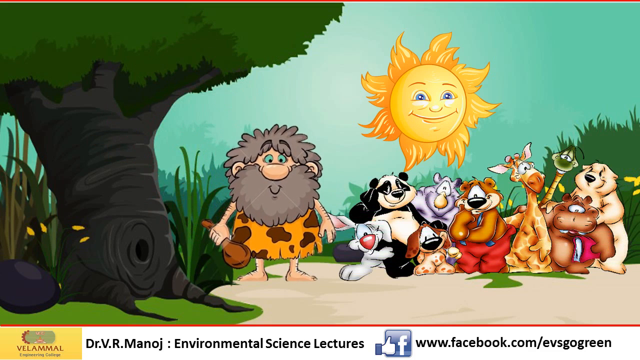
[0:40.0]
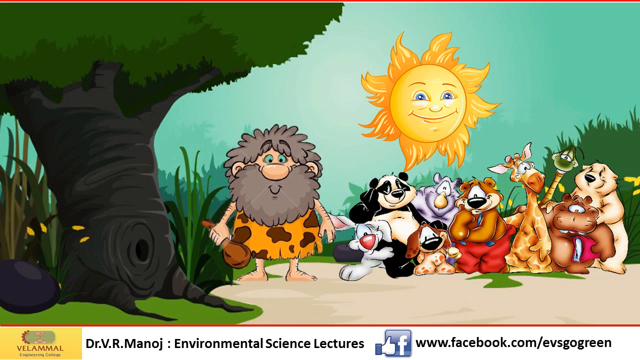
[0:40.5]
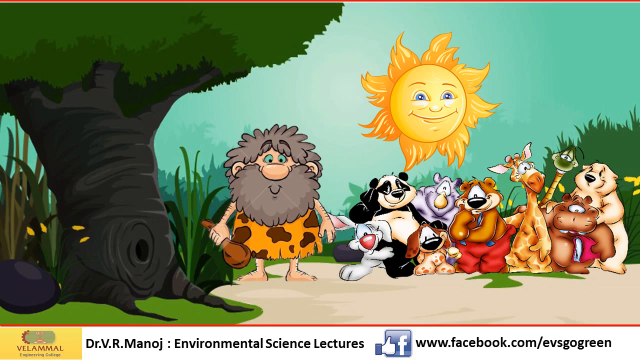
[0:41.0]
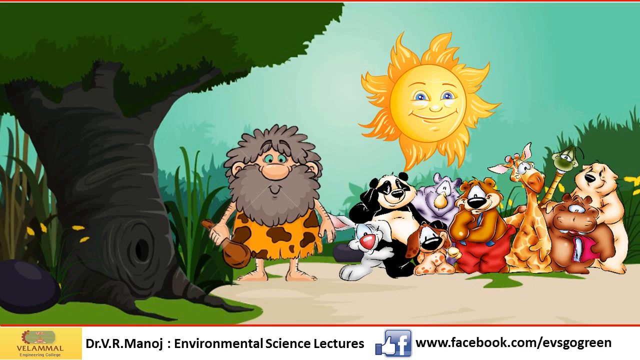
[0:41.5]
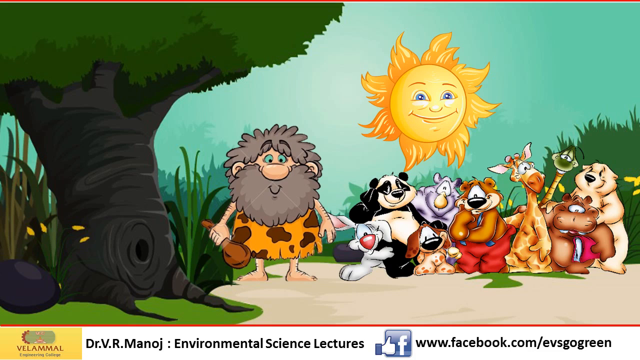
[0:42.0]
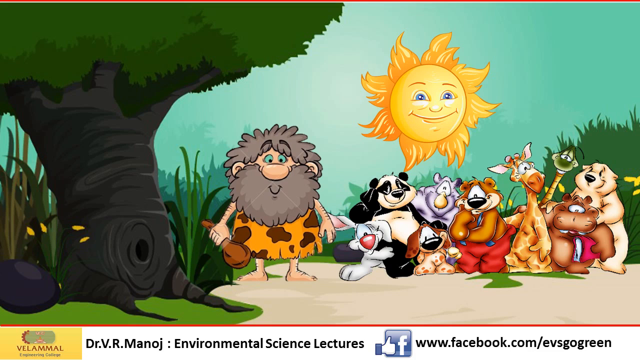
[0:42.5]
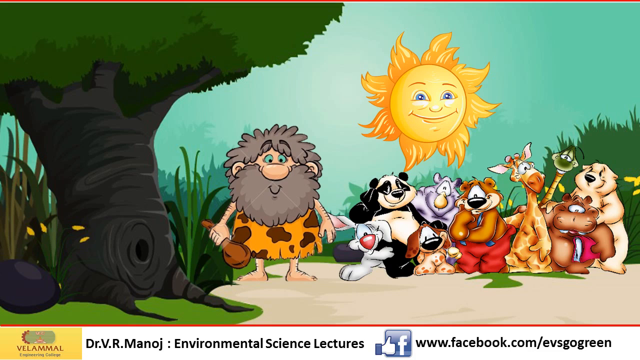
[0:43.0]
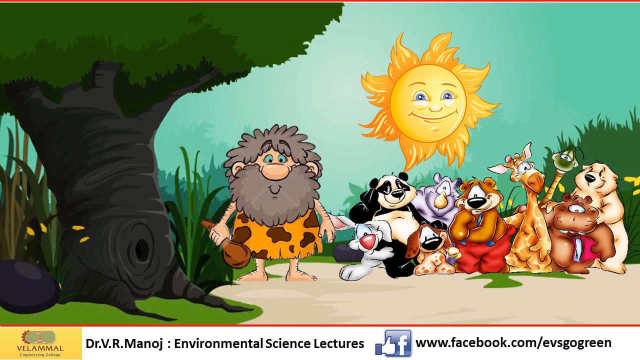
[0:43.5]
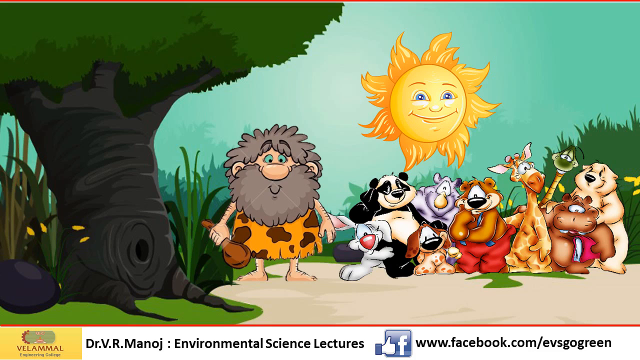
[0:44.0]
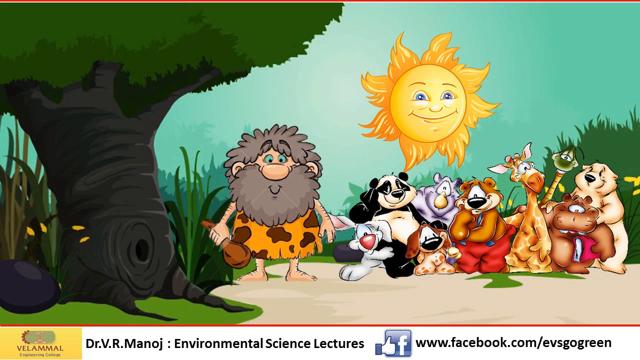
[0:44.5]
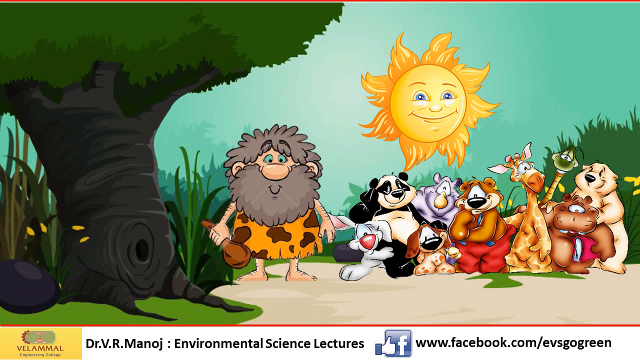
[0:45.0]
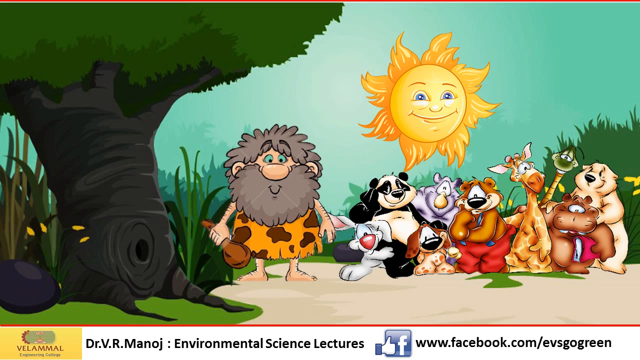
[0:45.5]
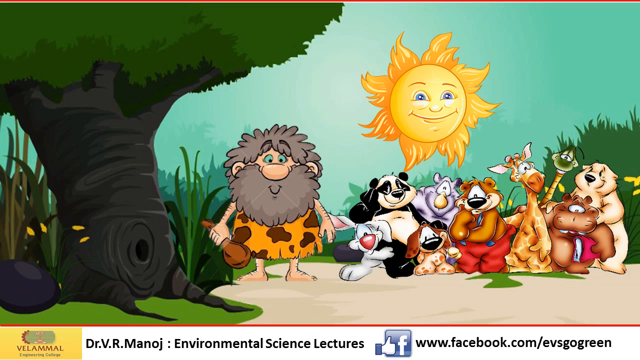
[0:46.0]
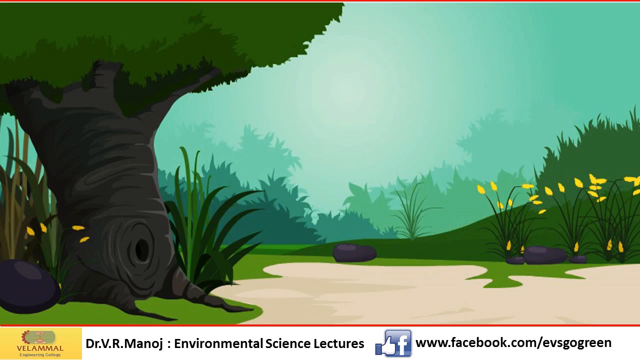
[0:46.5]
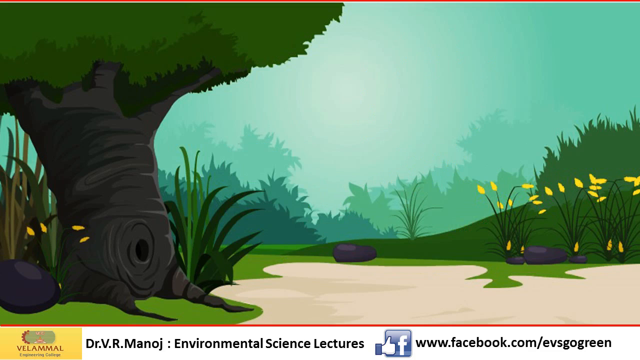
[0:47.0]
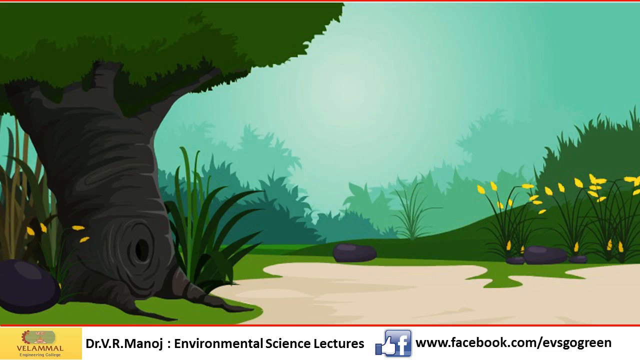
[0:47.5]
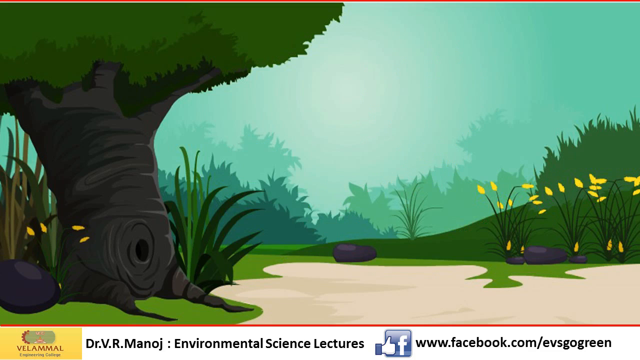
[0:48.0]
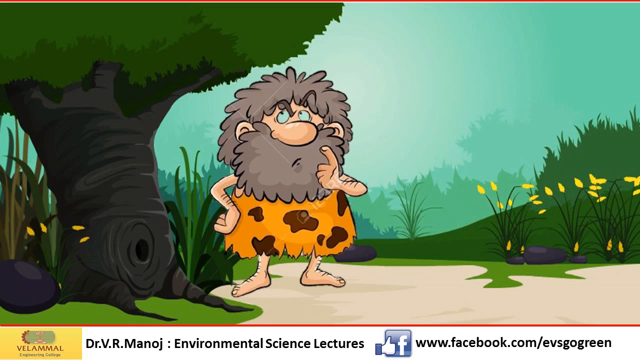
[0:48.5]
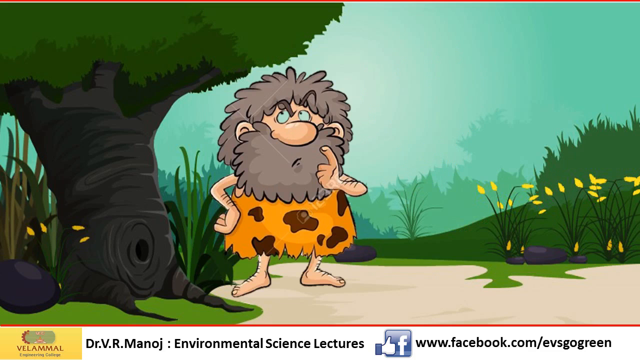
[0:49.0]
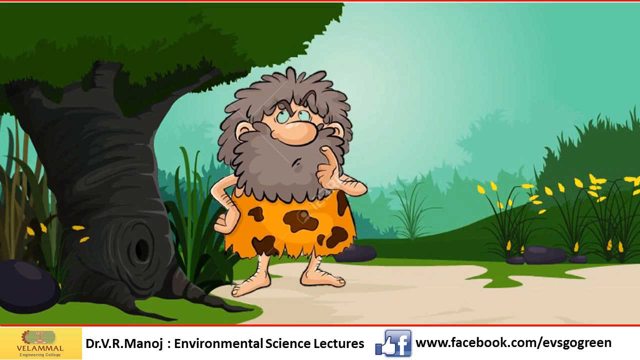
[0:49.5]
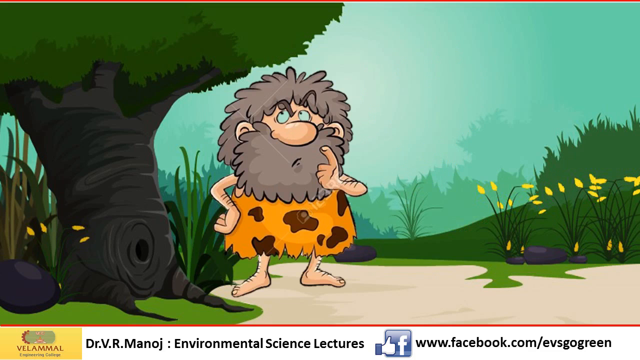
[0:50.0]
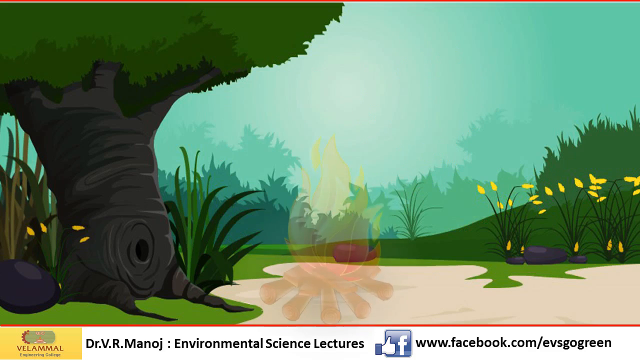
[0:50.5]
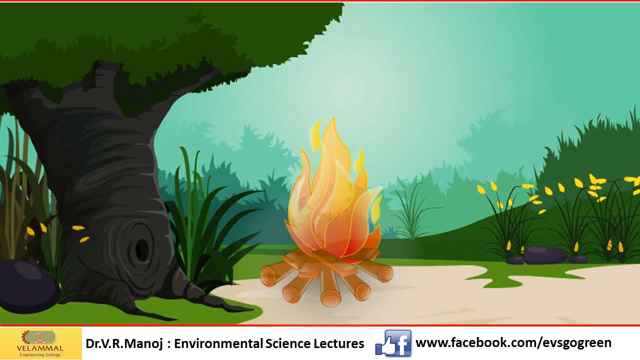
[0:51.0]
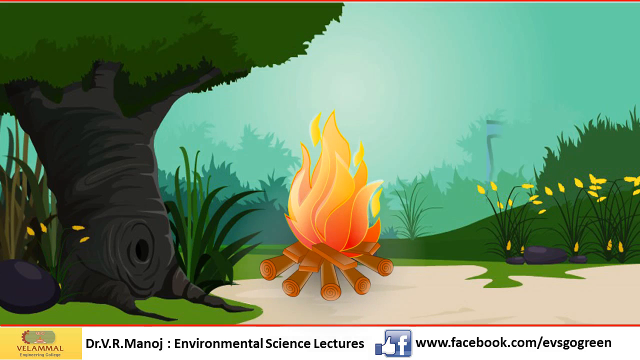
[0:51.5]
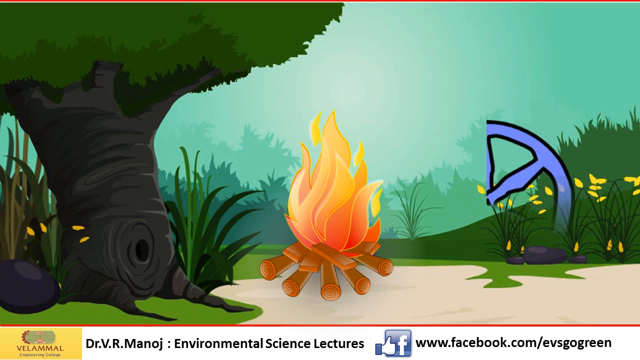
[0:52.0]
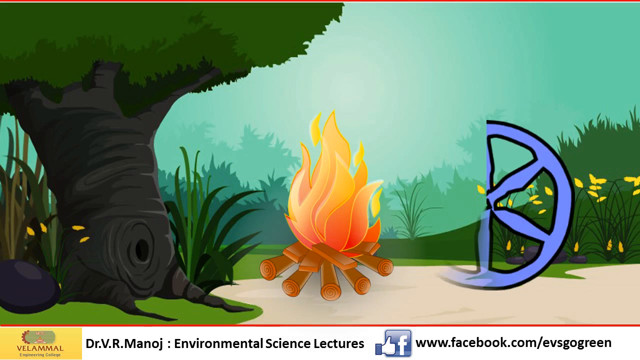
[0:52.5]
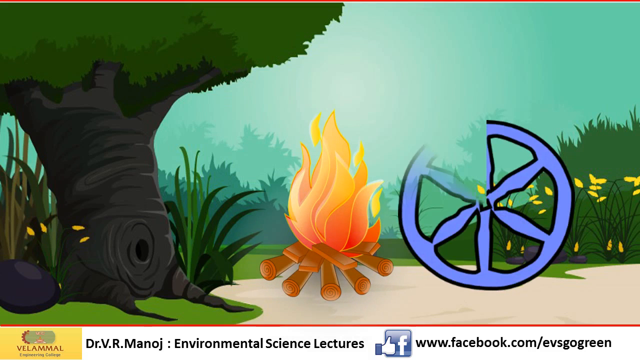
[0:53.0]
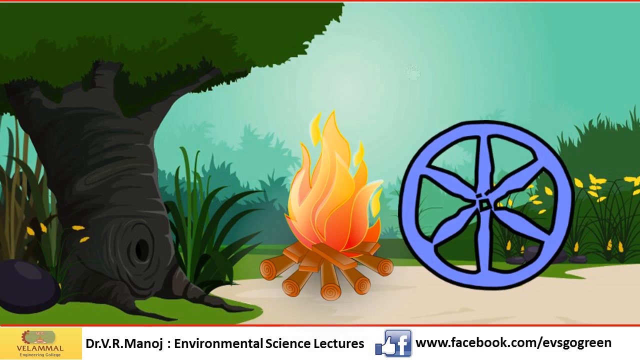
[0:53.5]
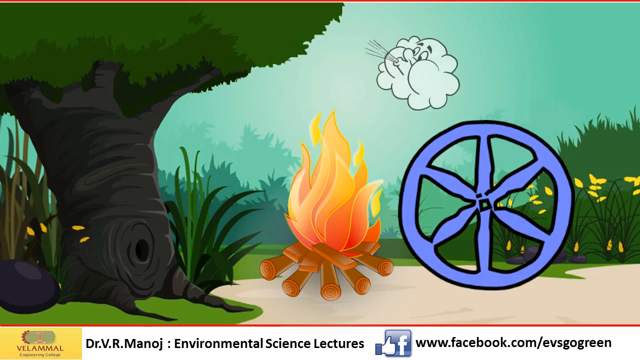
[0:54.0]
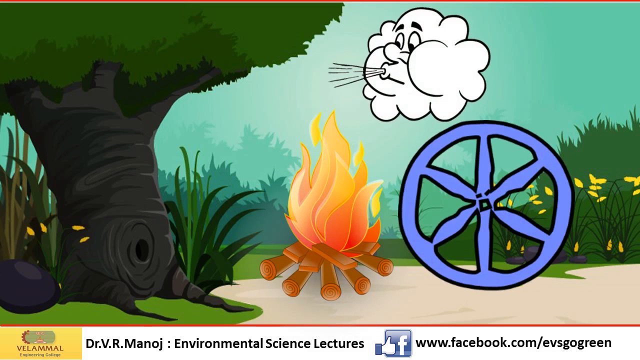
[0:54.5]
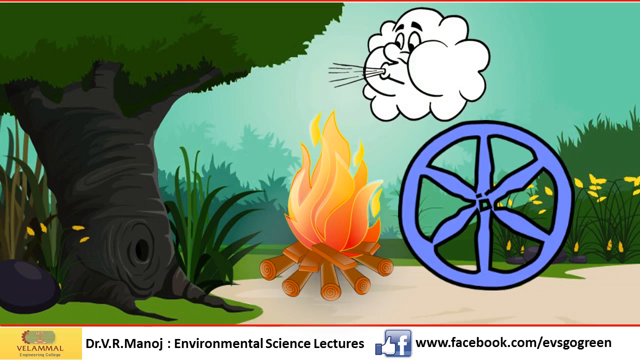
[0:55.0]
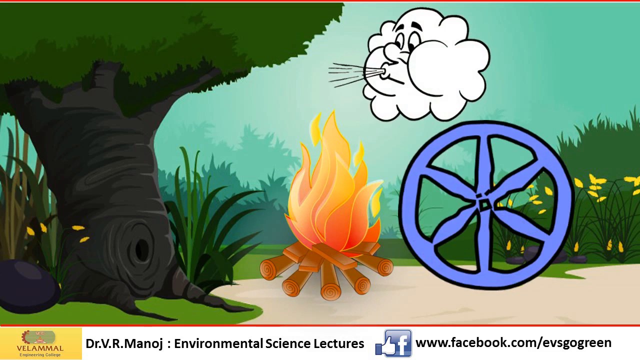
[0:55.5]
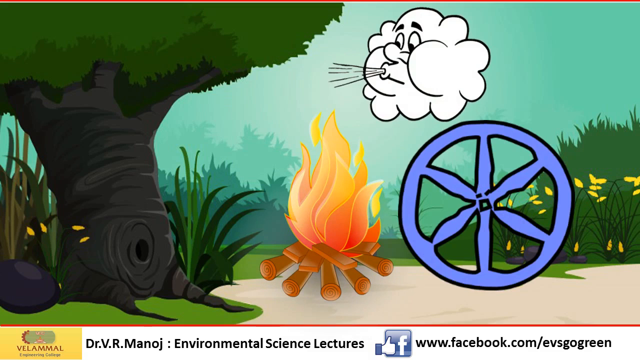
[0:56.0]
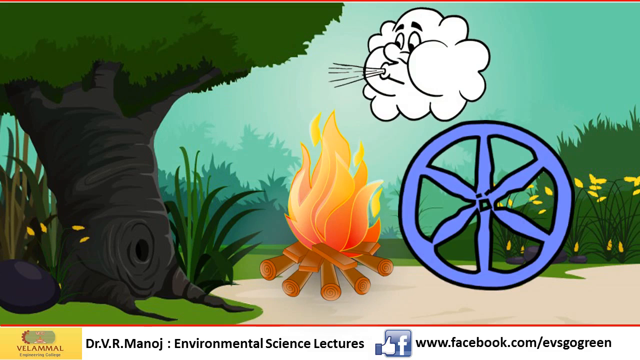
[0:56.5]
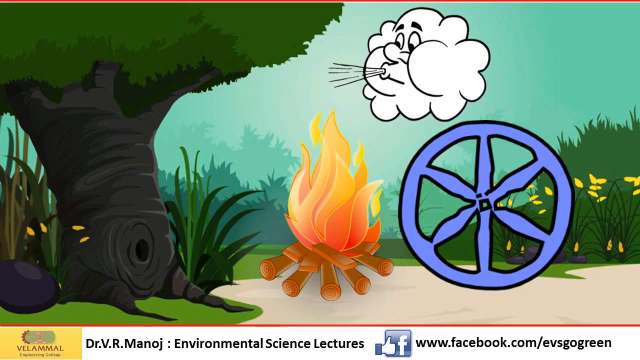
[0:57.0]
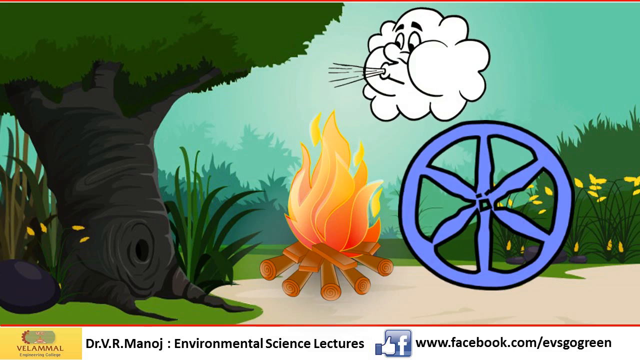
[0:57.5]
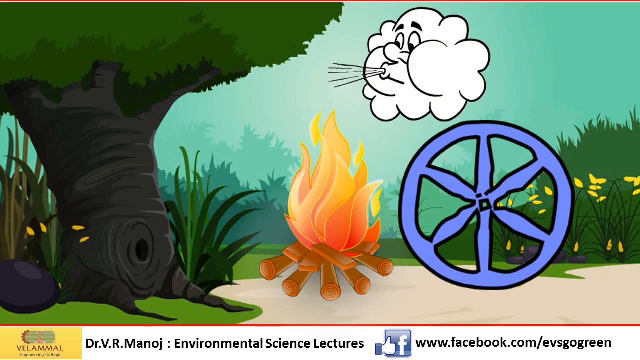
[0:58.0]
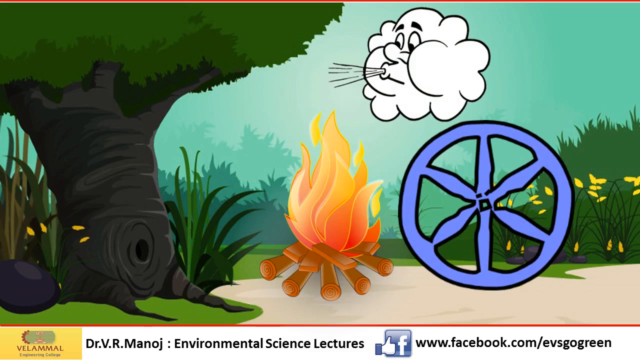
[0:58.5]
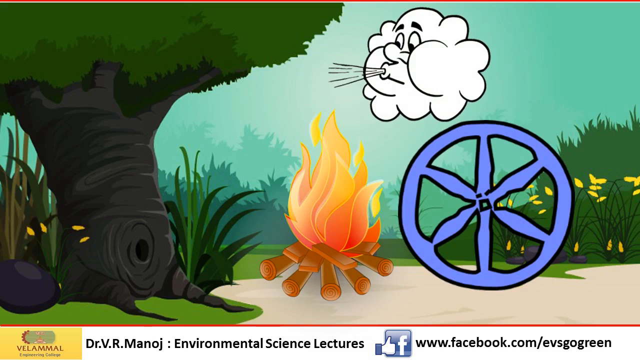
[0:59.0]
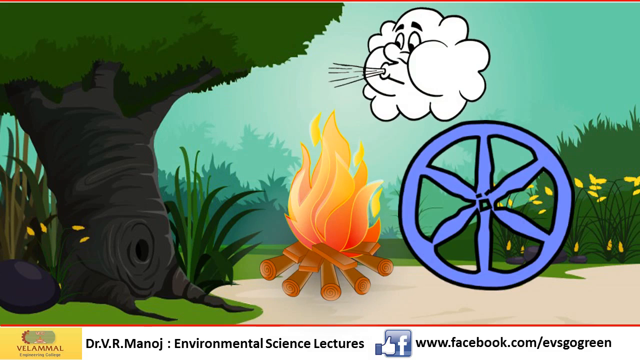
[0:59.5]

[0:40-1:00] A cartoon-style illustration of nature shows a large dark green tree with a thick brown trunk on the left and a variety of animals. Starting from the left is an unusual, cute caveman character with a bulbous nose, big gray beard and hair, and a cheetah-style shirt, holding a stick in his right hand, facing forward with blue eyes and smiling. To his right, from left to right, are a white bunny rabbit, a black and white panda bear, a brown bear wearing red pants, a goofy-looking giraffe, a snake head peeking out behind, and a white polar bear. A banner at the bottom reads "Balammal Engineering College, Dr. B. R. Manoj". The illustration then shows the story of evolution, with the caveman first and then an image of smoke and fire being created.